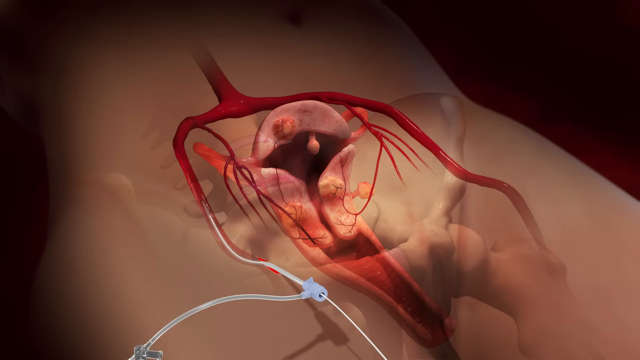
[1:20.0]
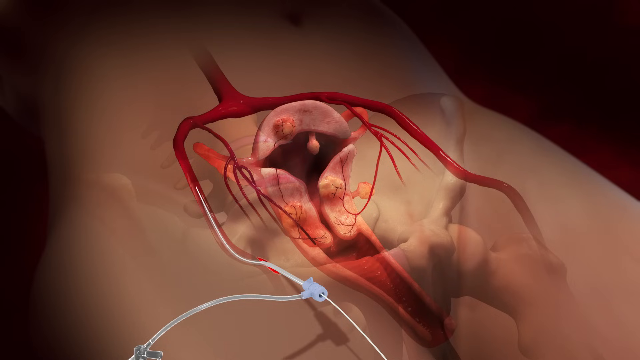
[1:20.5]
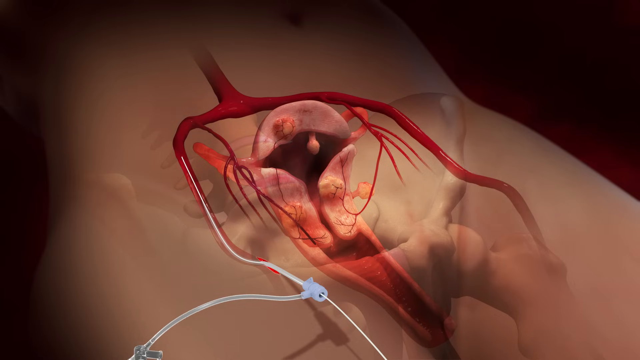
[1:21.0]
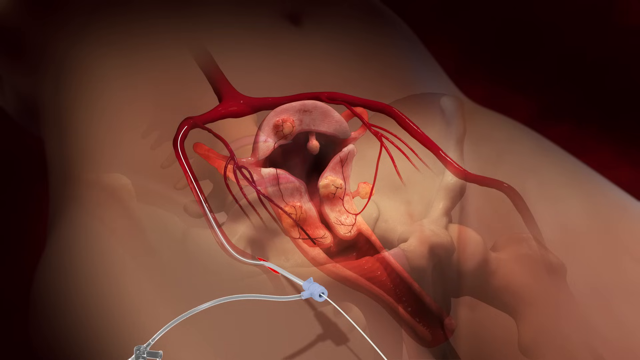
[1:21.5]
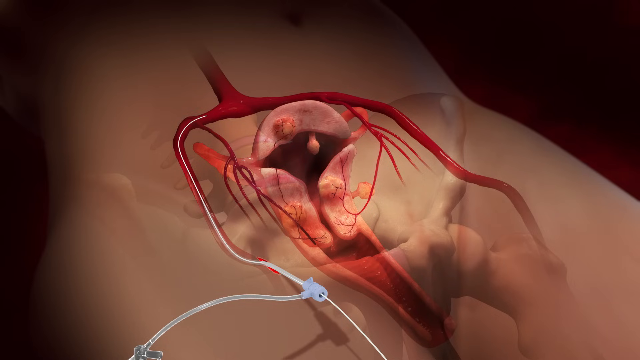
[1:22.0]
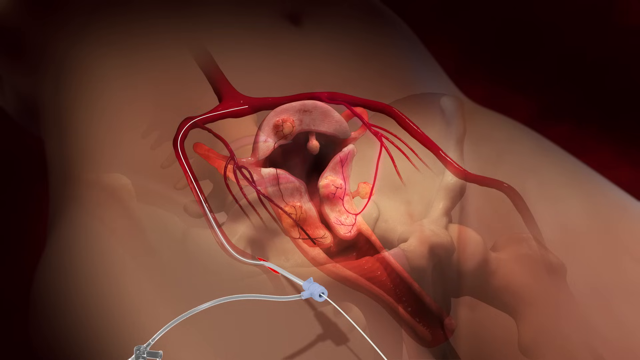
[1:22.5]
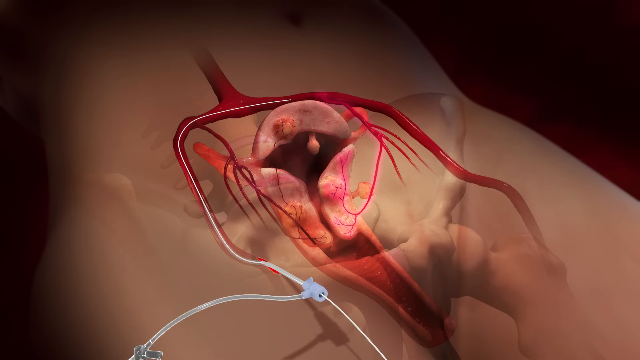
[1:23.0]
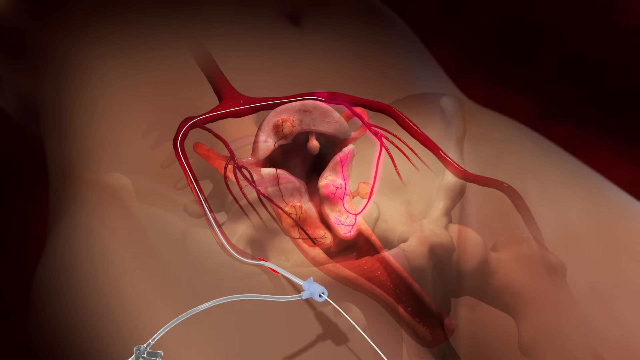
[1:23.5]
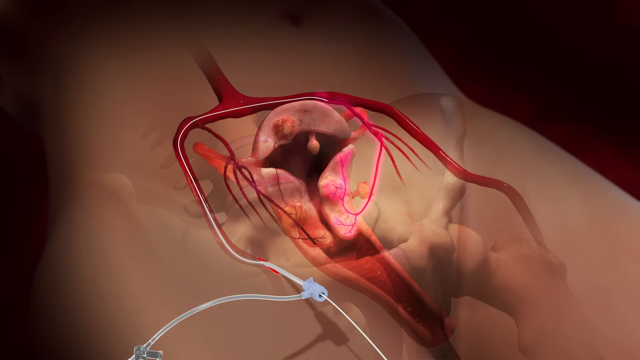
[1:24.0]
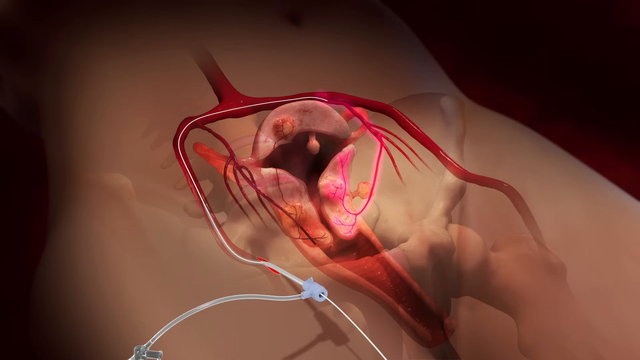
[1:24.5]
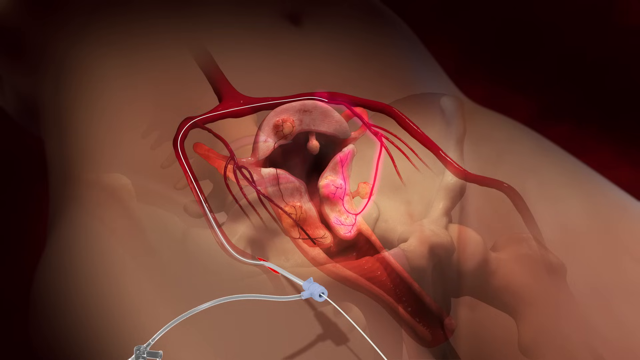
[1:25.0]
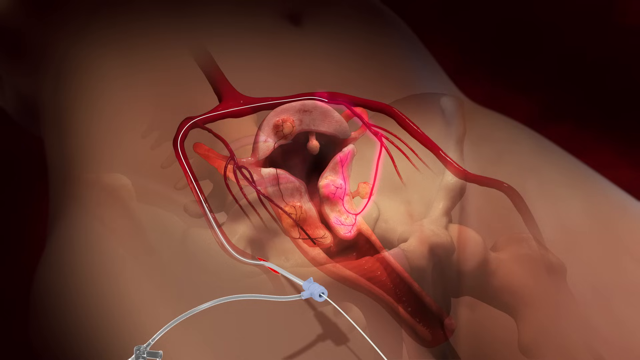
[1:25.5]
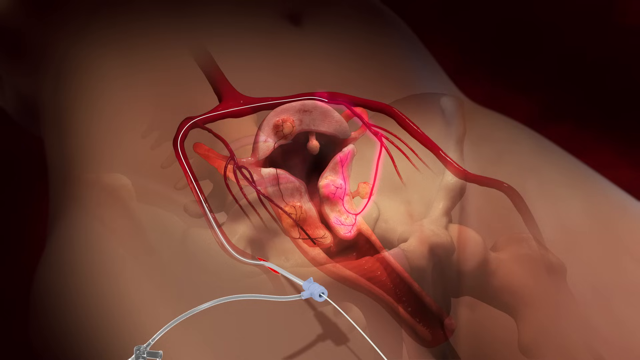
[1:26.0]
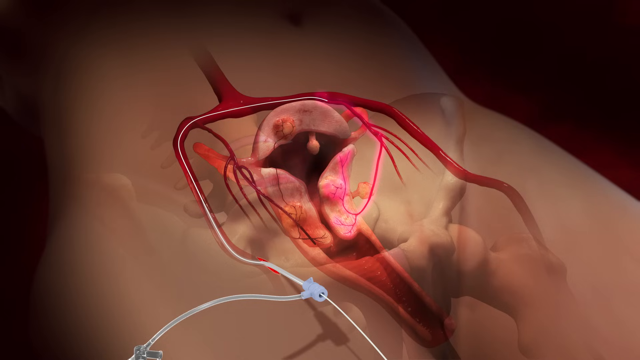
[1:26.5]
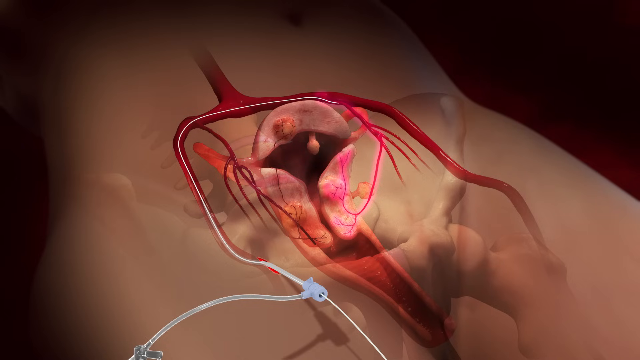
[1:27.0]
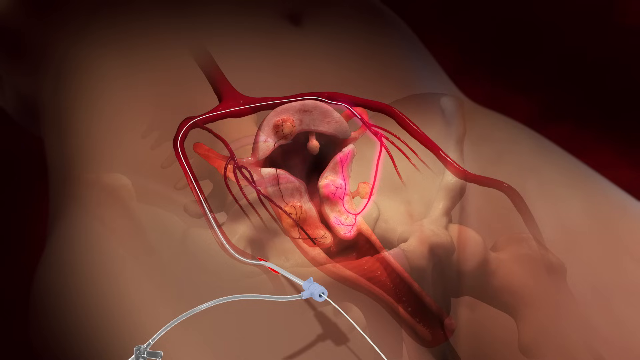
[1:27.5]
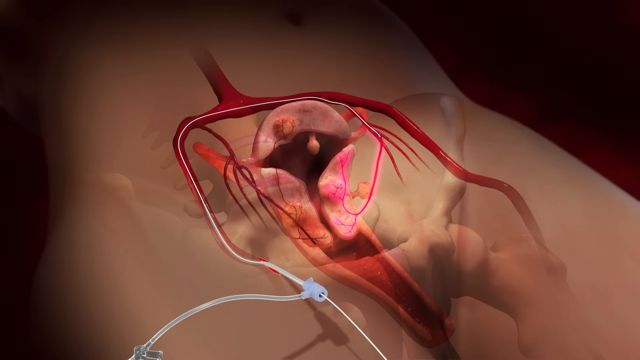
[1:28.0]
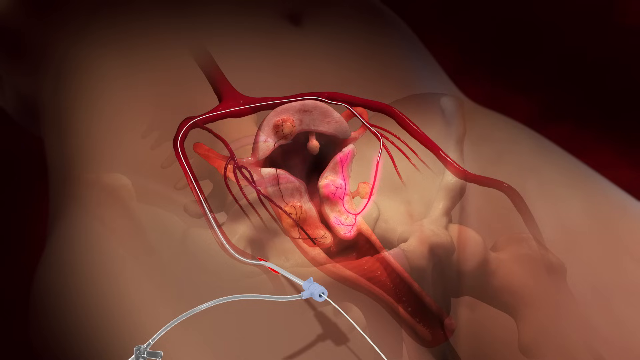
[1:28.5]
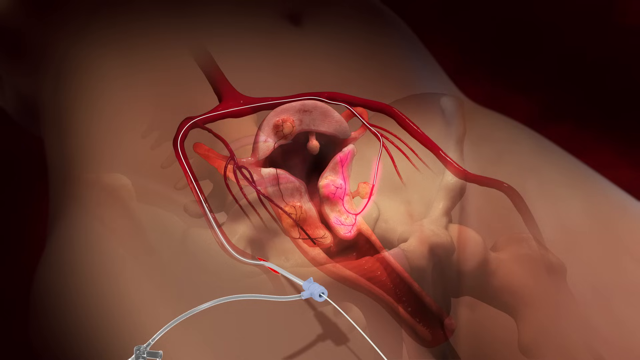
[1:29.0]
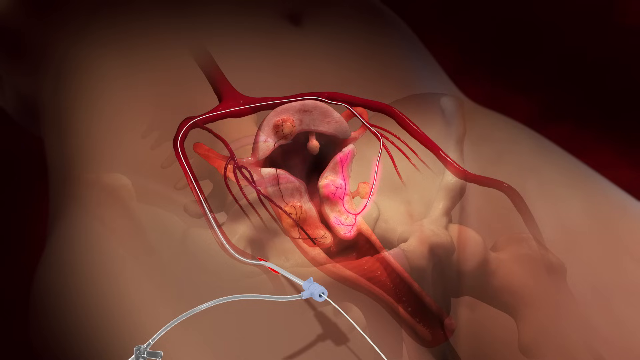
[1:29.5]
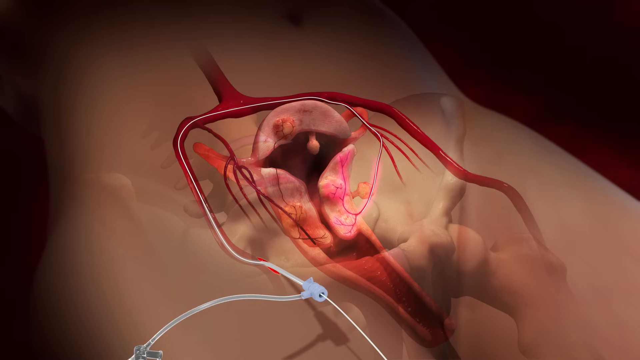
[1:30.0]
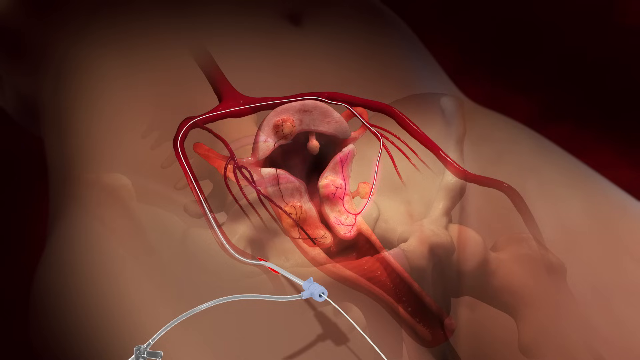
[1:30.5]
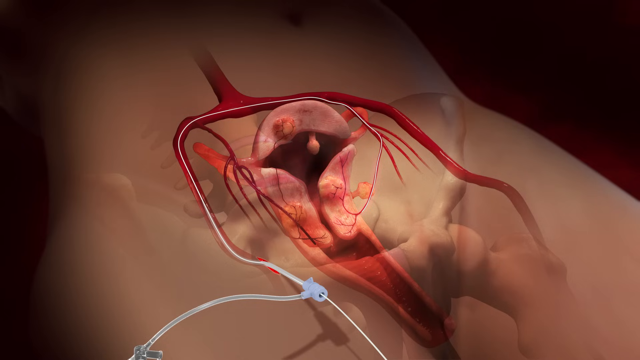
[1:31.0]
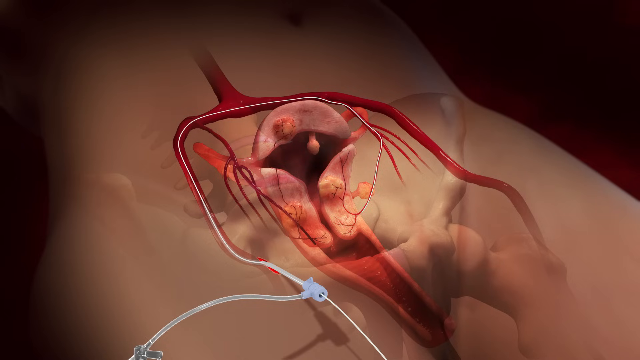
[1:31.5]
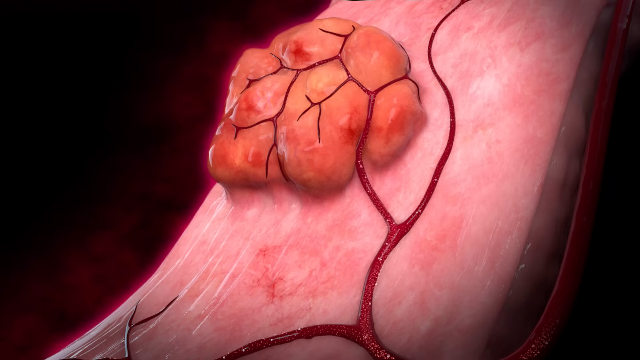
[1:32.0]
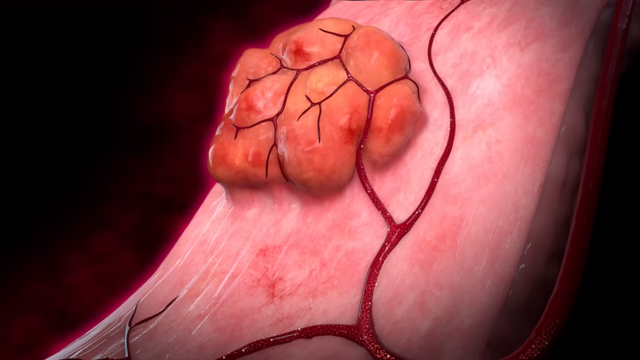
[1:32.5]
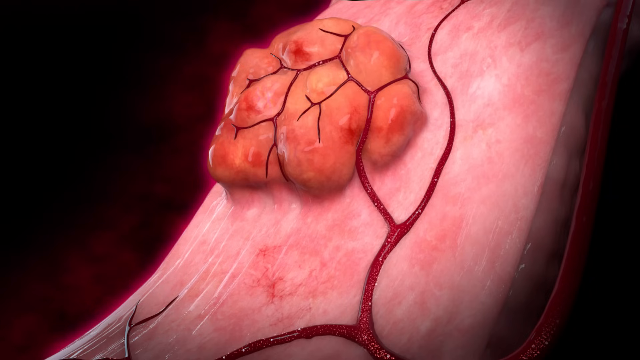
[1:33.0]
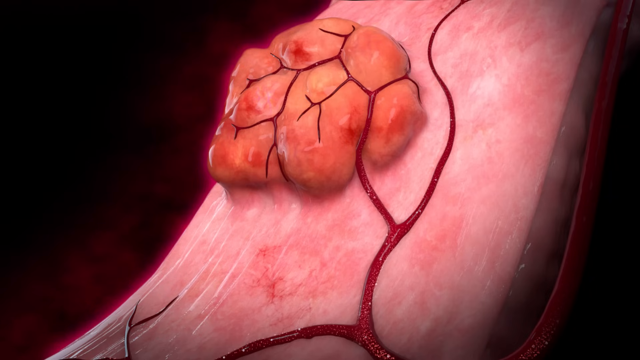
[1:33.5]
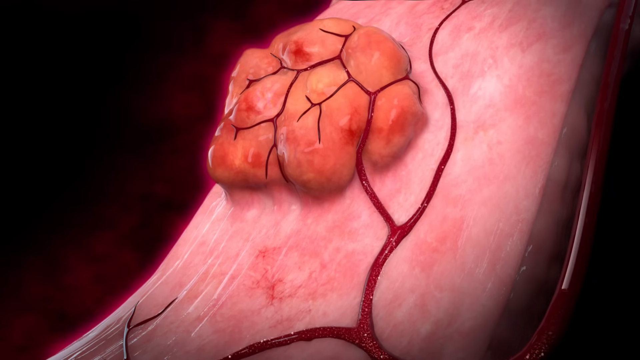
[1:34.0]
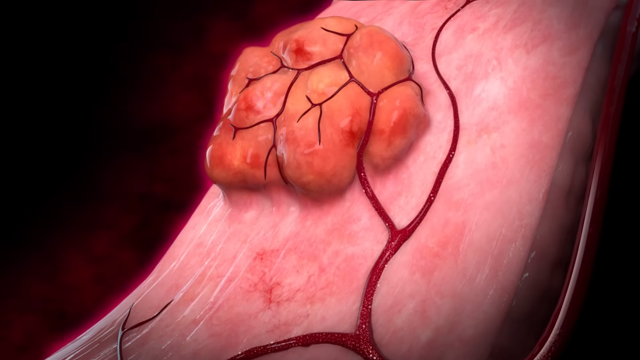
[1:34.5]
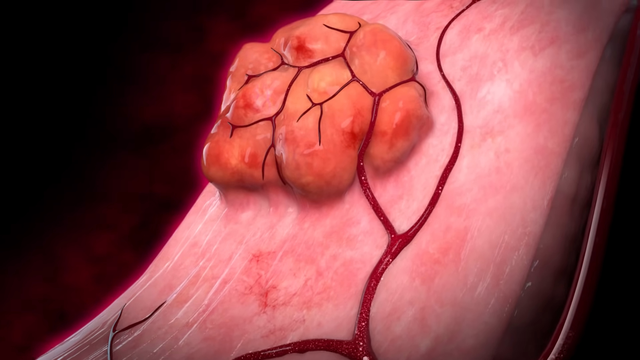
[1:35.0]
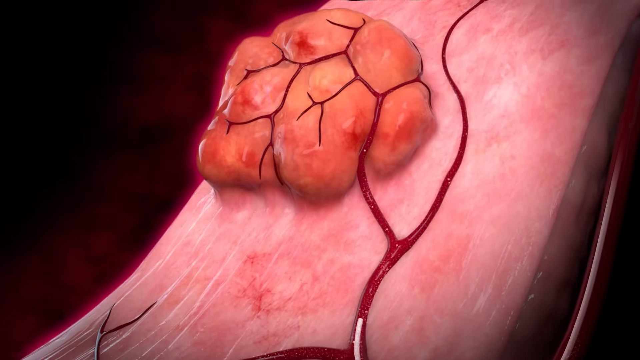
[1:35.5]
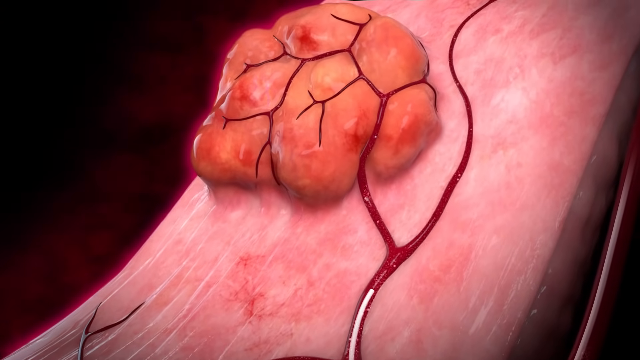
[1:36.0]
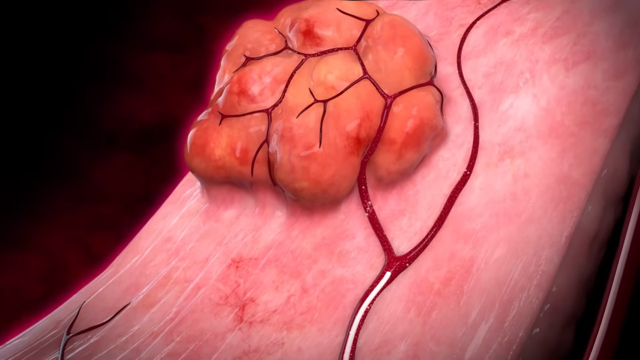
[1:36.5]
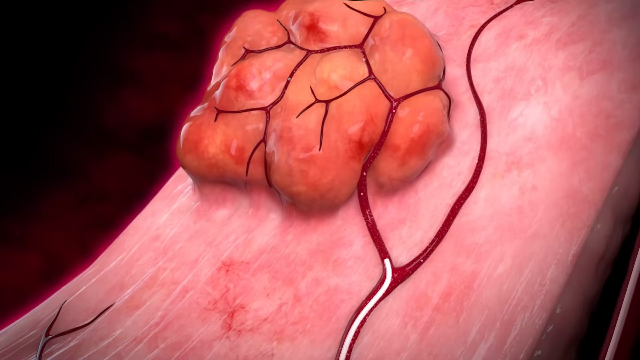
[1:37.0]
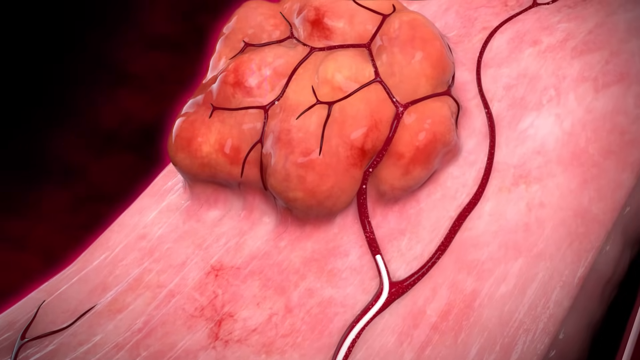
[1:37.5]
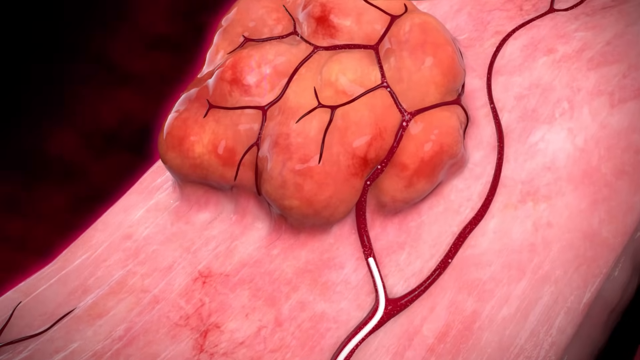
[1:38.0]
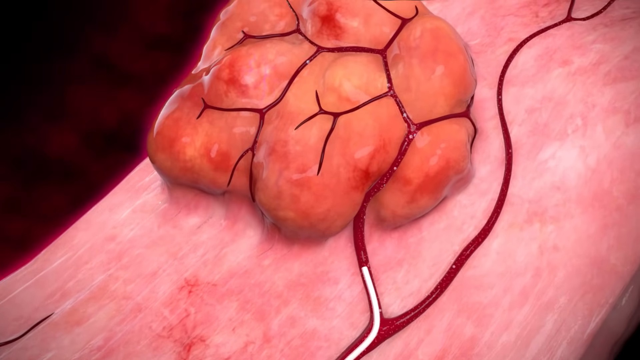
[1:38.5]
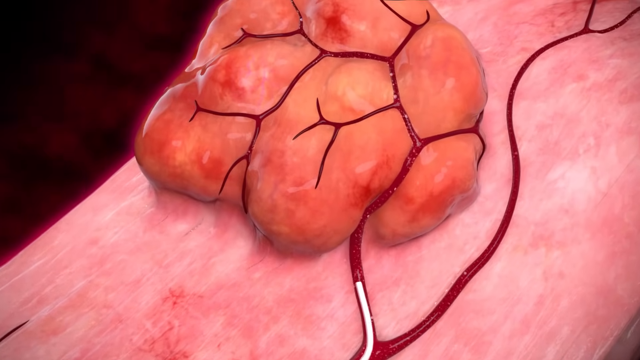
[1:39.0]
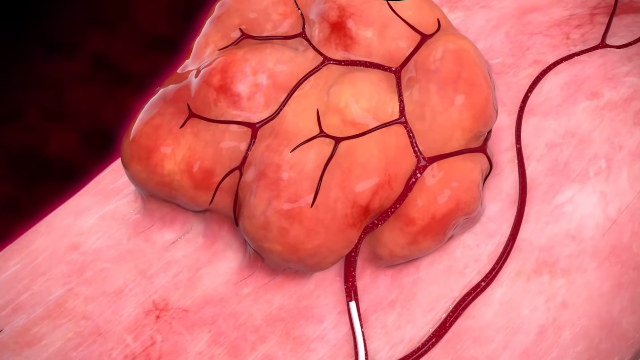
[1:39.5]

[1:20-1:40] A CGI of a woman's reproductive tract shows where in the body the uterus would be, in a kind of cross-section with the pelvic bones and spine kind of superimposed behind it. Various types of uterine fibroids are visible: some grow into the wall, some grow on the outer part of the wall, and some hang down into the uterus. There seems to be some sort of PICC line inserted into a vein, or possibly an artery; it is white with a blue cap, and two hoses kind of come out of it. Medicine then travels up the vein and down, goes down a tiny vein, and enters one of the fibroids, where the medicine turns into little balls.